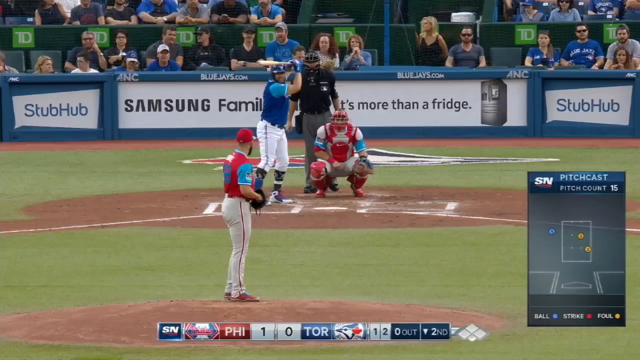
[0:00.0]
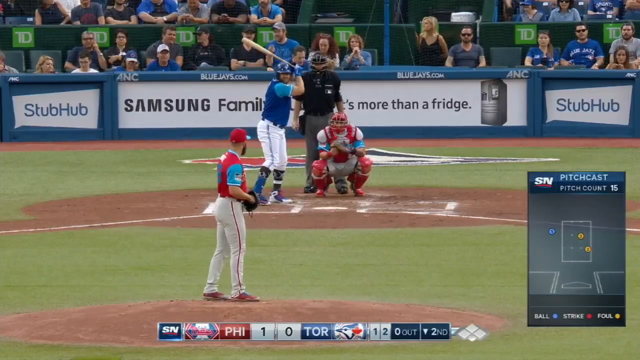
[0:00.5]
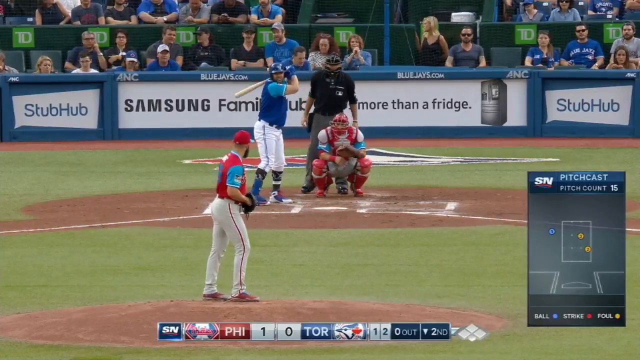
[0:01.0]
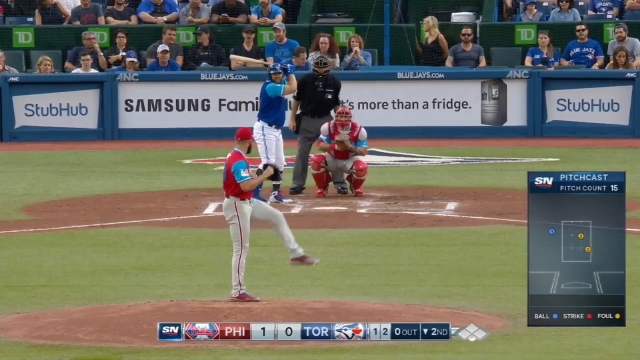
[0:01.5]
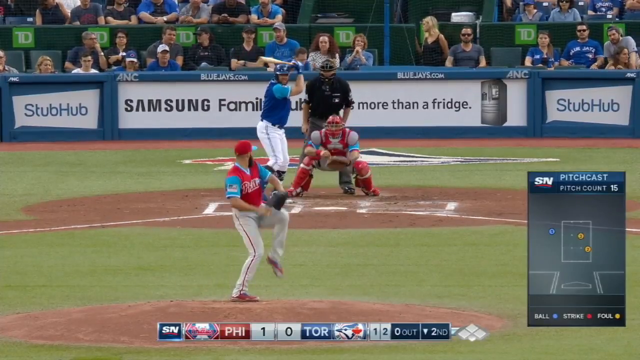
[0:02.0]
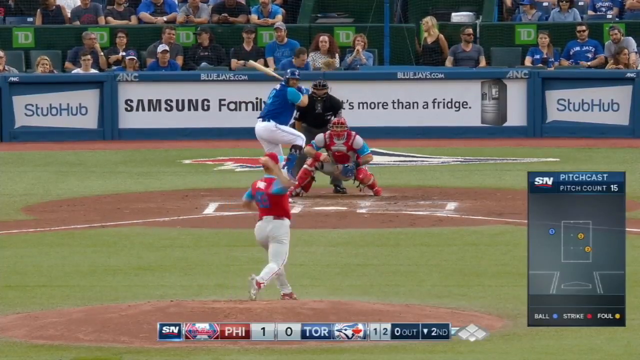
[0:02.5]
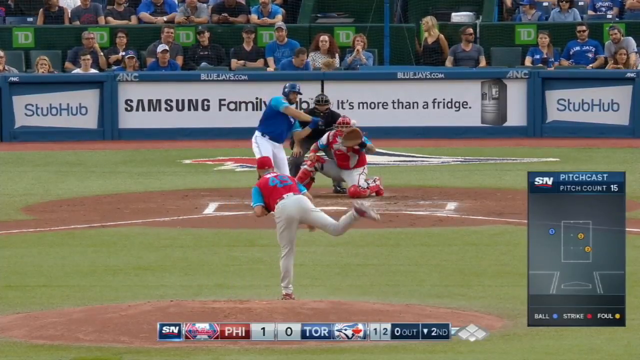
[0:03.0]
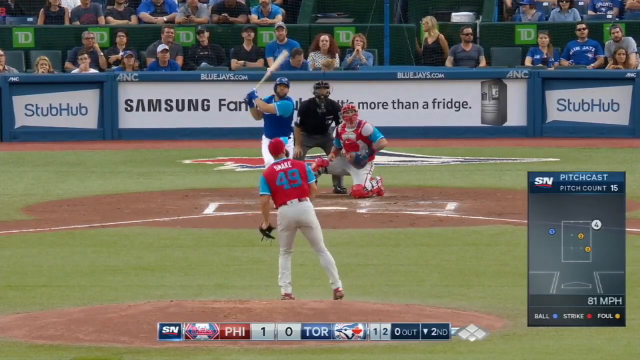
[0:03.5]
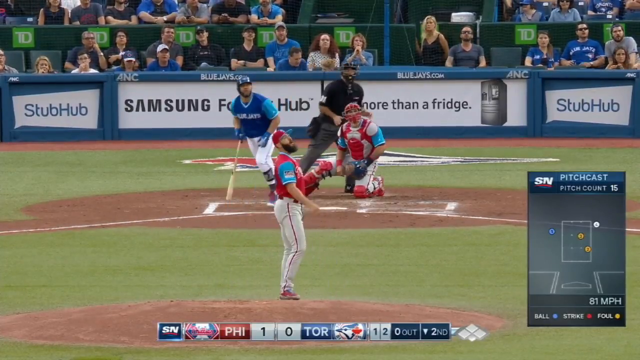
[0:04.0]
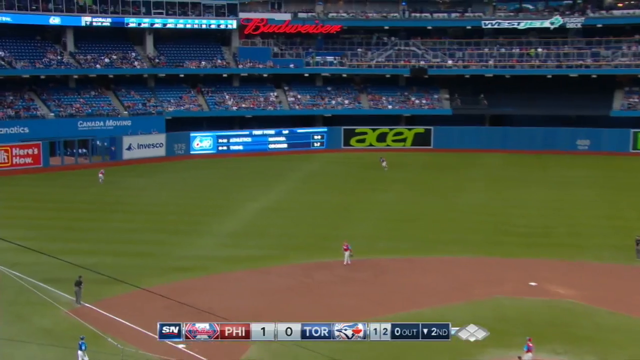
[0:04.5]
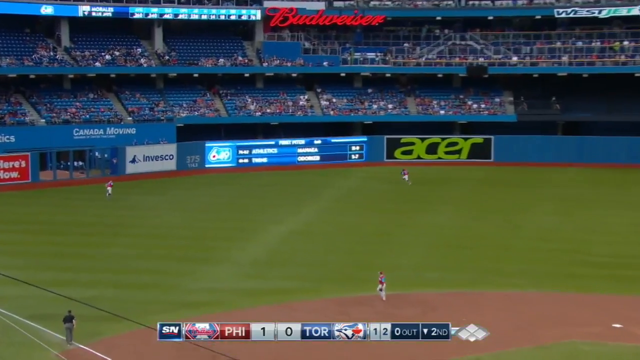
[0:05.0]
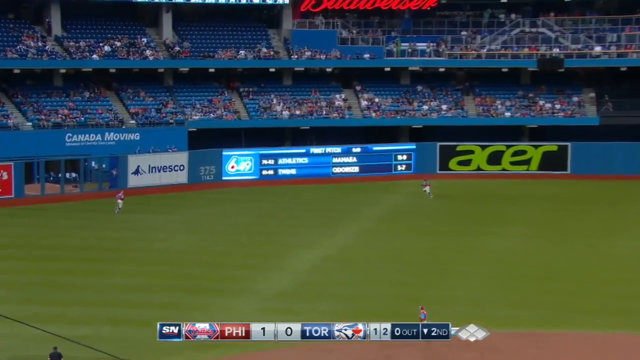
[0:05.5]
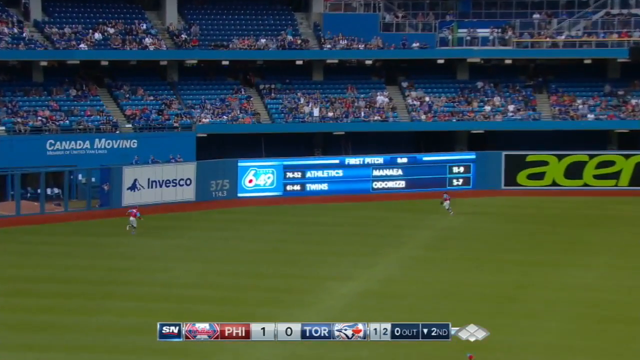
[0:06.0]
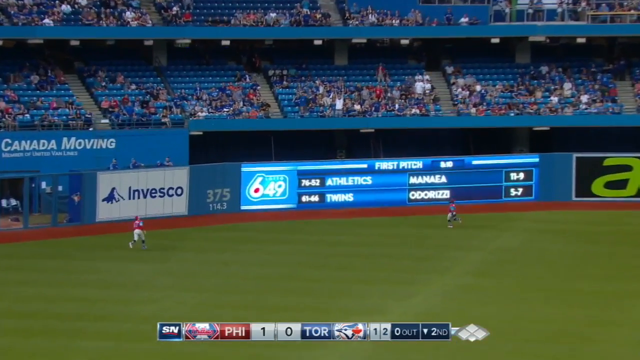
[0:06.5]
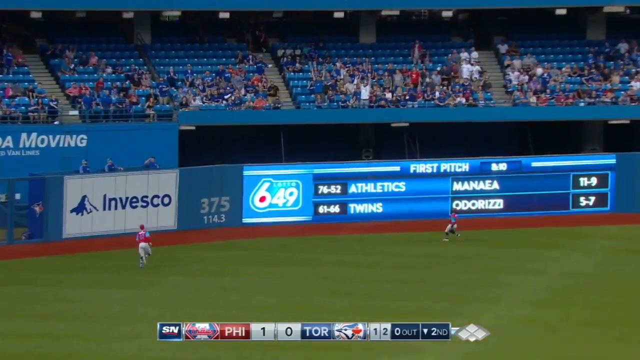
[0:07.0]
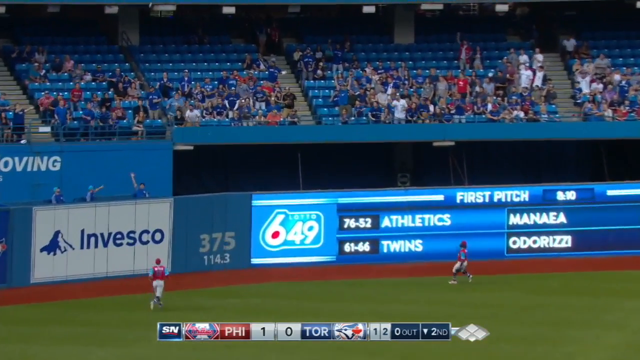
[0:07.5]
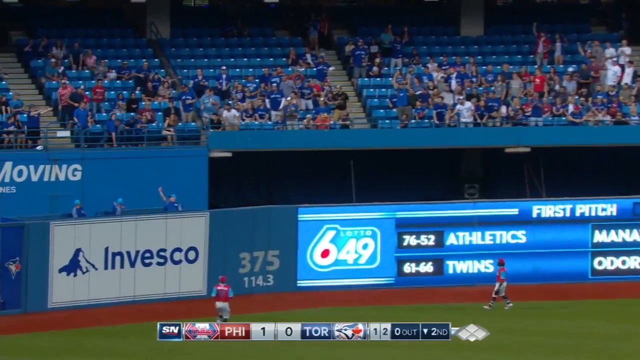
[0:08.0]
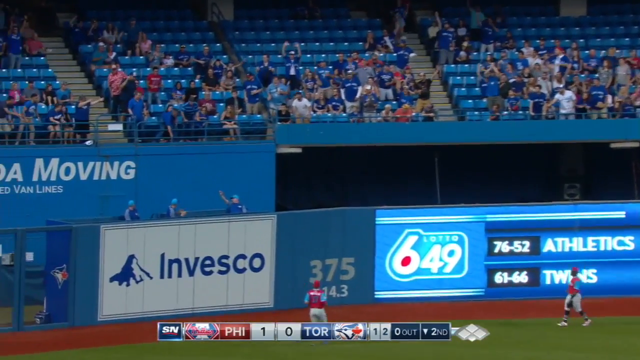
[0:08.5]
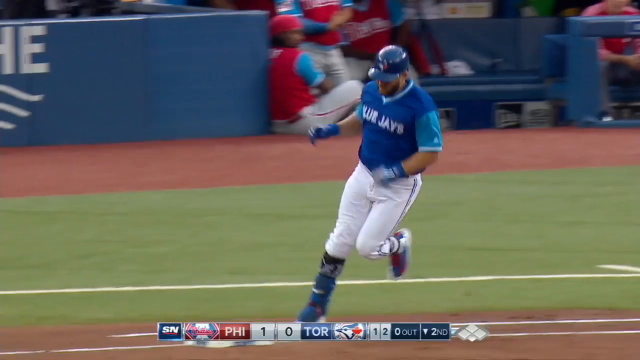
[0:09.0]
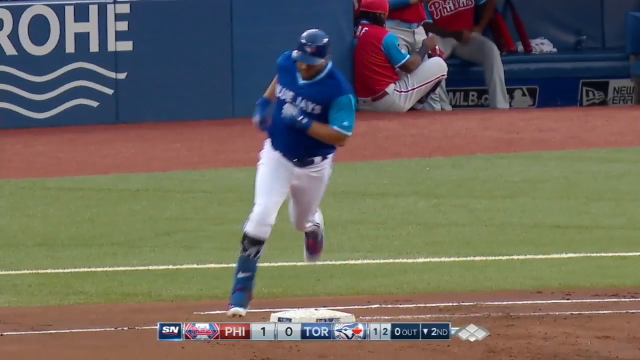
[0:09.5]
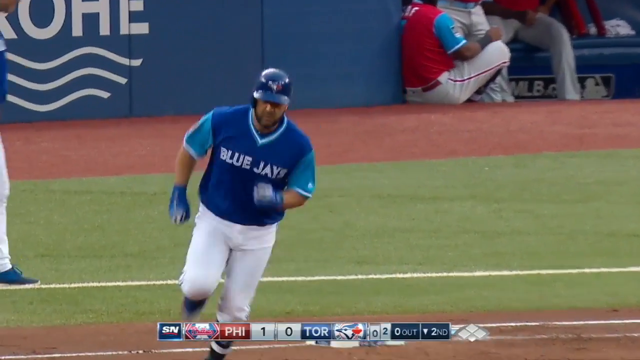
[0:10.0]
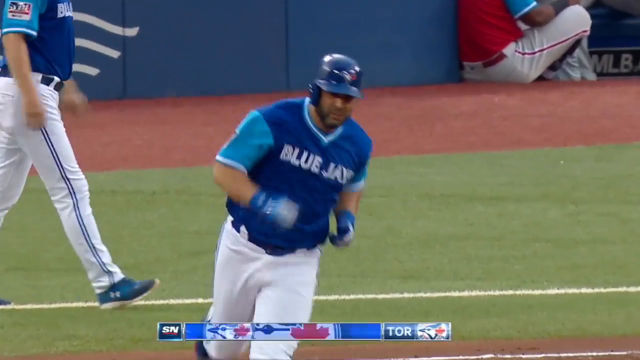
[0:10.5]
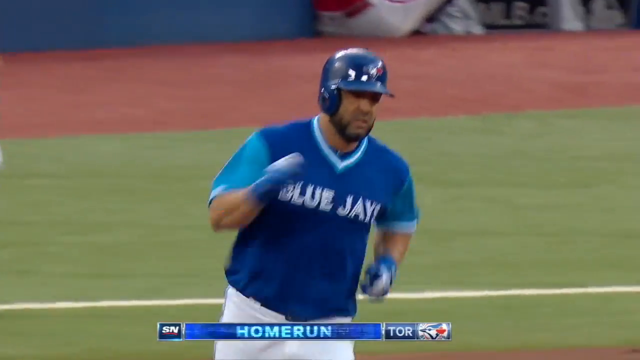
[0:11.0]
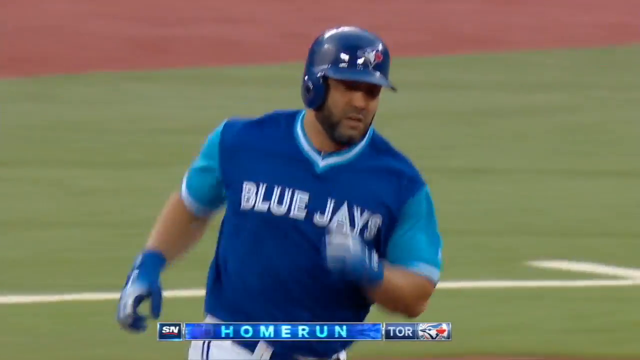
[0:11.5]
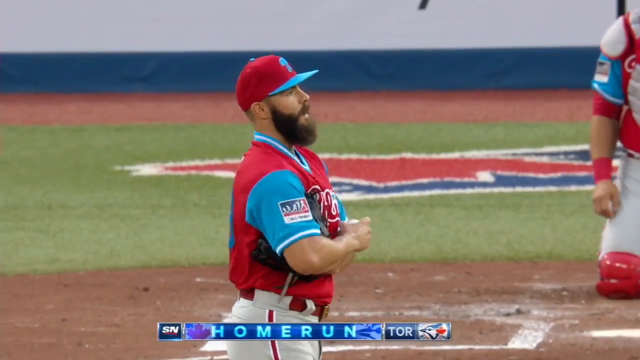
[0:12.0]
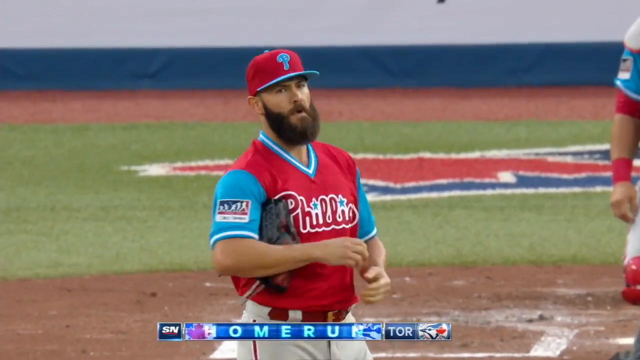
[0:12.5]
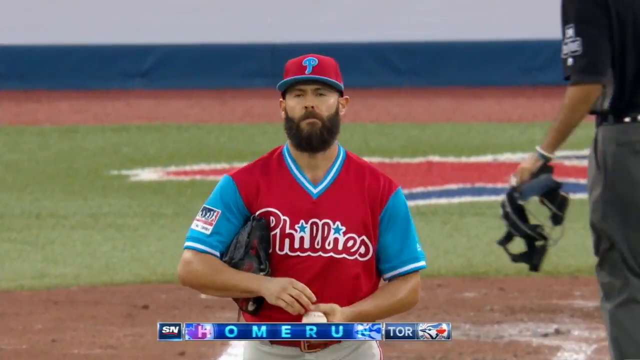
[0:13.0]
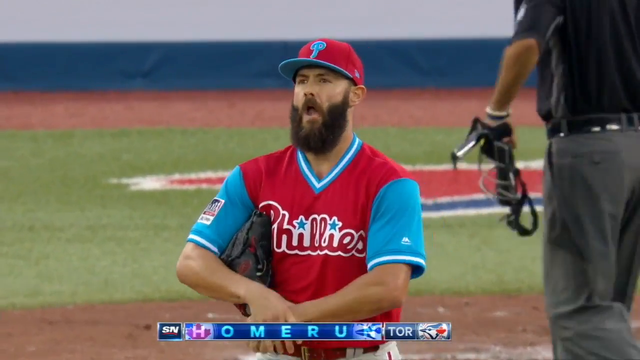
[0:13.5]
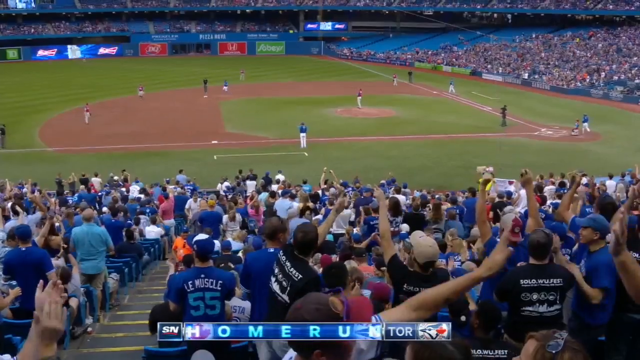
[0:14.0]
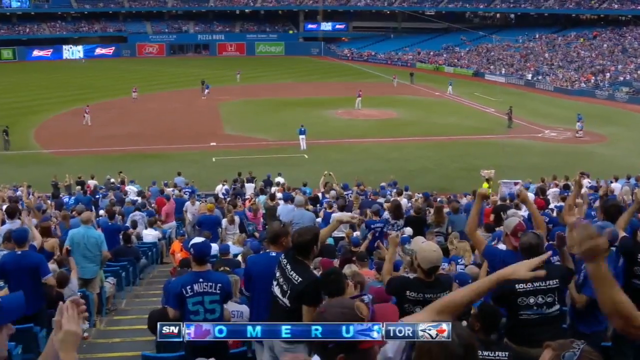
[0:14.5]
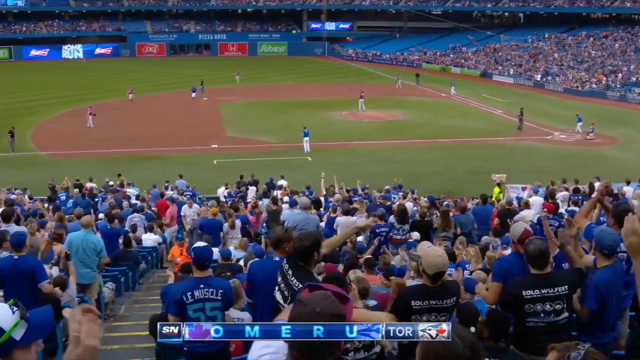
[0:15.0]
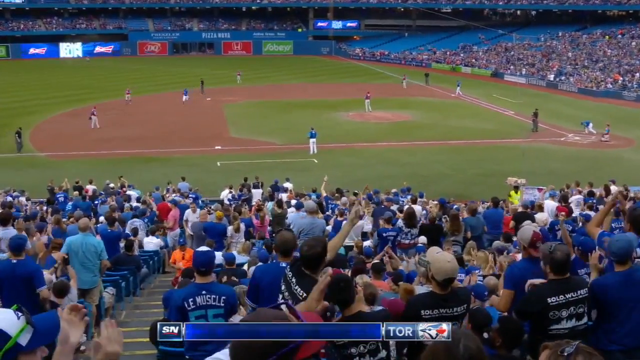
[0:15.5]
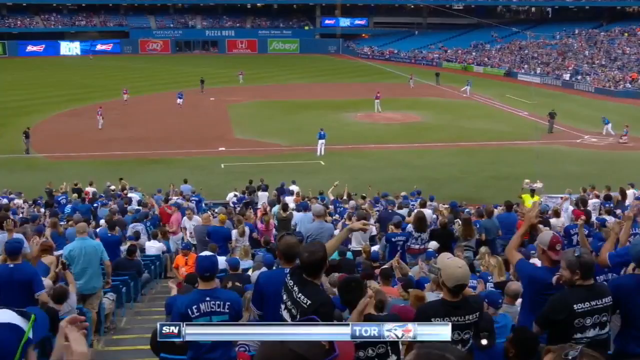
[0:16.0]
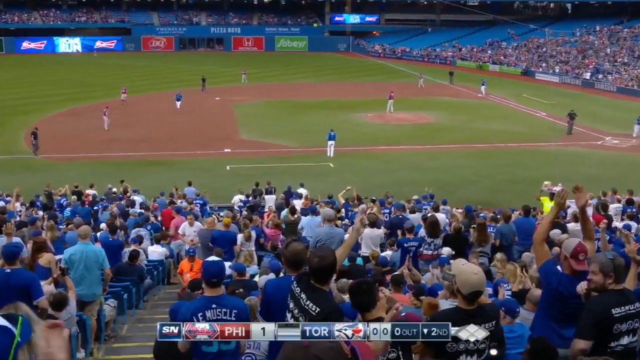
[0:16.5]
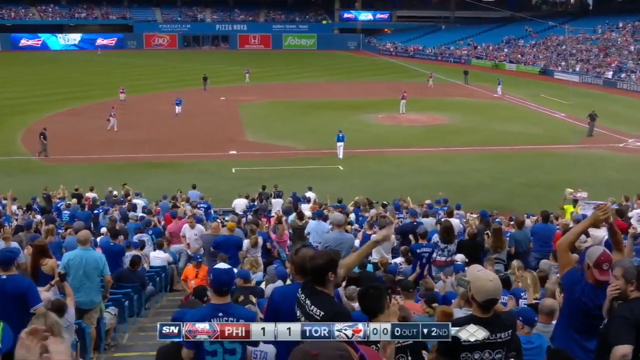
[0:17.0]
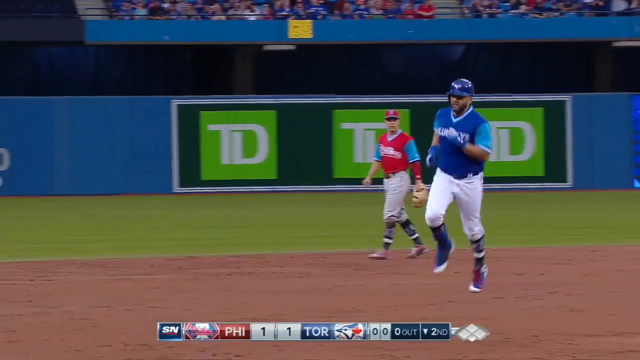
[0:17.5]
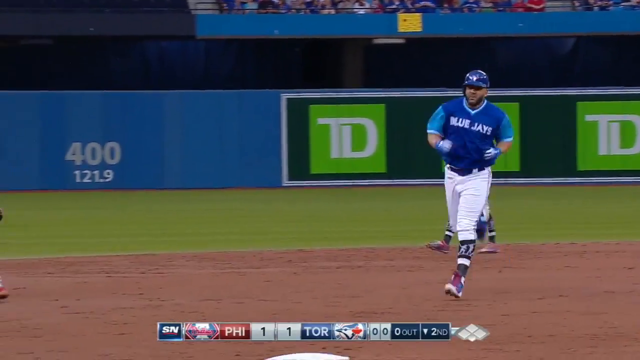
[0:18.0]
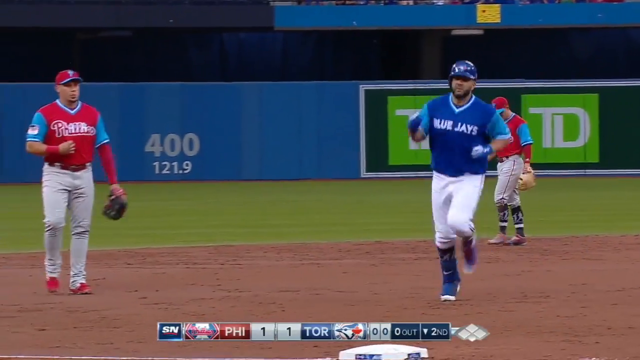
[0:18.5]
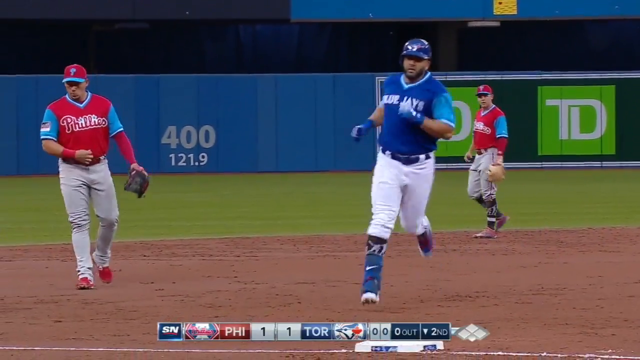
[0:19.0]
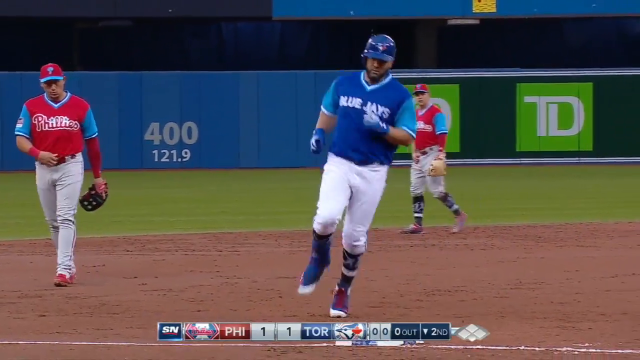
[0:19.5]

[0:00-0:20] A baseball game is being played, possibly a Major League Baseball (MLB) game. The shot is filmed from behind the pitcher as he throws the ball to the hitter, with the catcher and then an umpire behind the batter. In the background the crowd is sitting close to the field, and sponsor names such as StubHub and Samsung Family are visible. Protective fencing is up behind the batter. The pitcher, from the Phillies, throws the ball, and it is hit all the way over the fence for a home run. The score on the screen goes up, the crowd cheers, and the runner runs the bases.